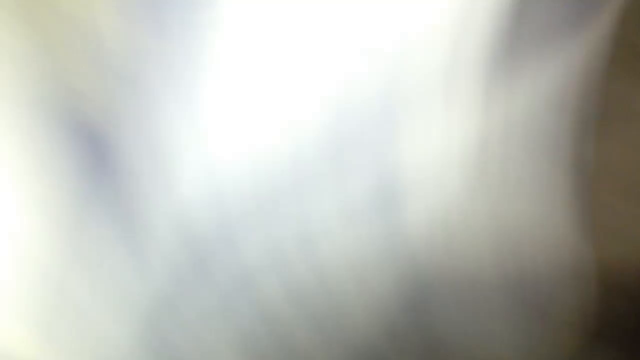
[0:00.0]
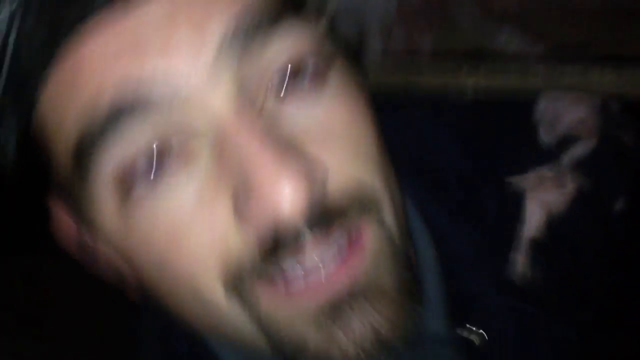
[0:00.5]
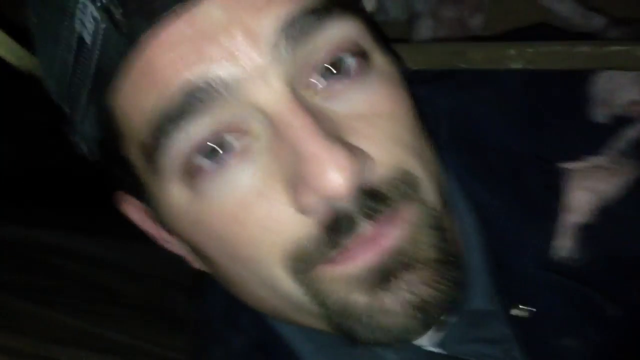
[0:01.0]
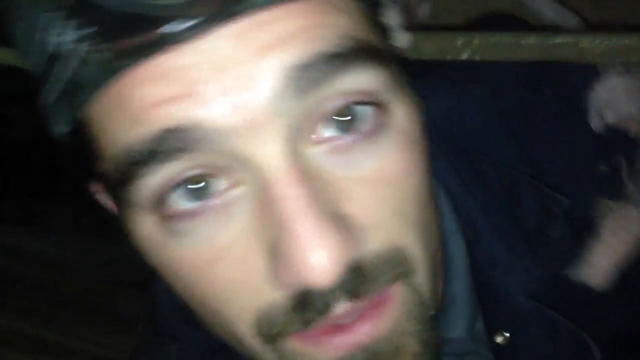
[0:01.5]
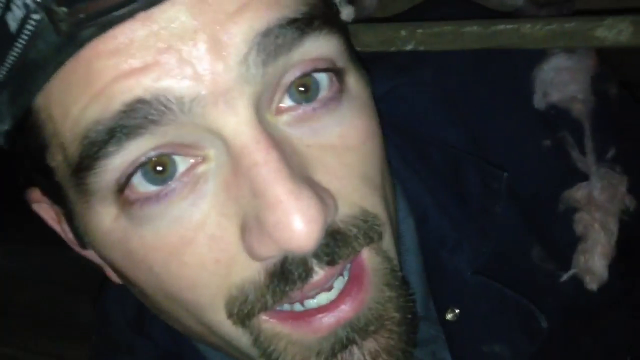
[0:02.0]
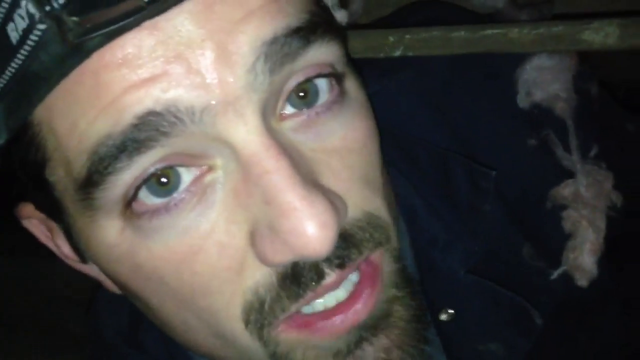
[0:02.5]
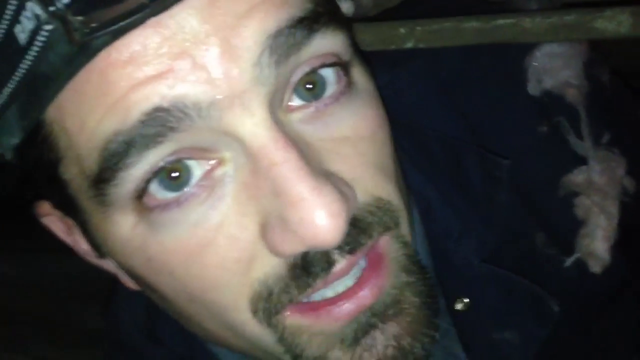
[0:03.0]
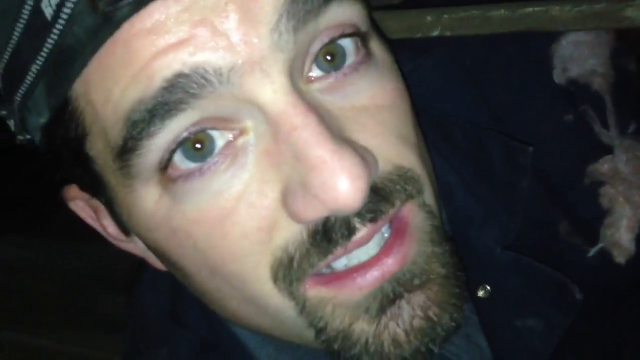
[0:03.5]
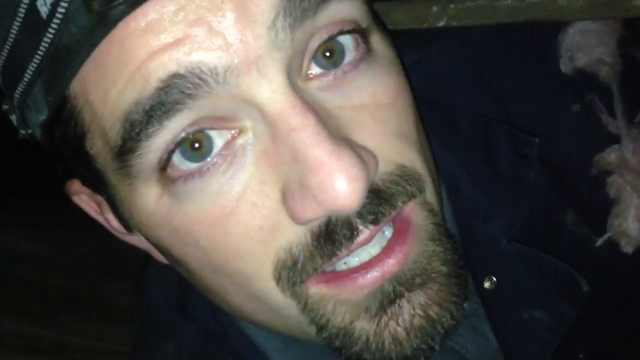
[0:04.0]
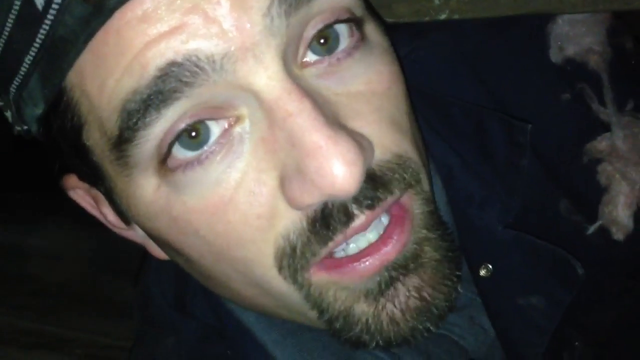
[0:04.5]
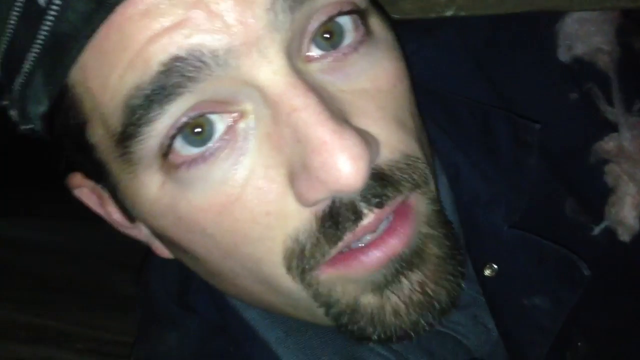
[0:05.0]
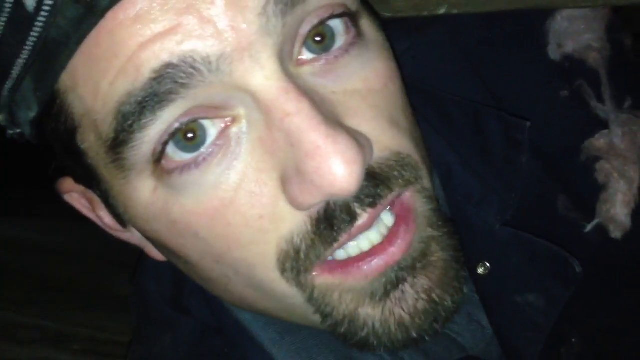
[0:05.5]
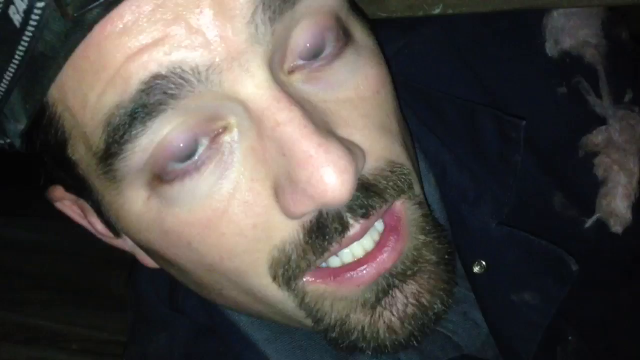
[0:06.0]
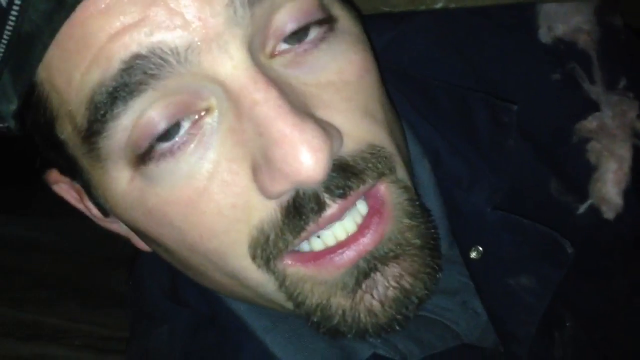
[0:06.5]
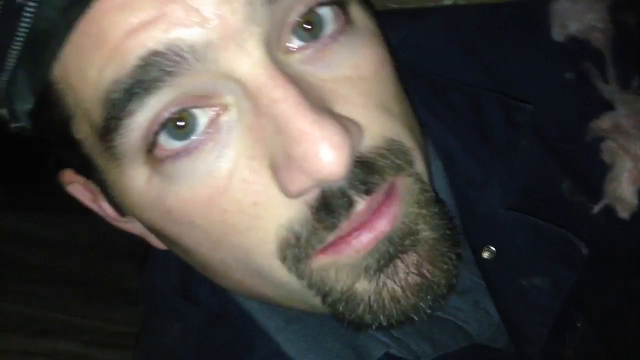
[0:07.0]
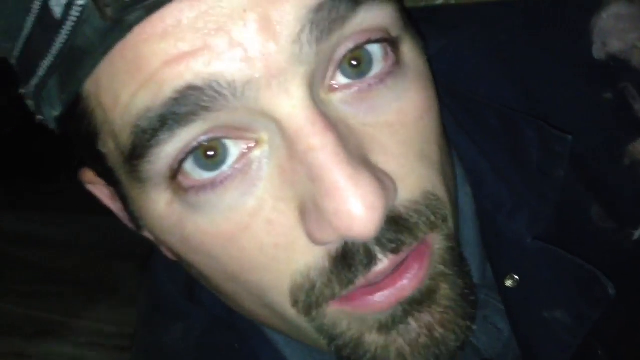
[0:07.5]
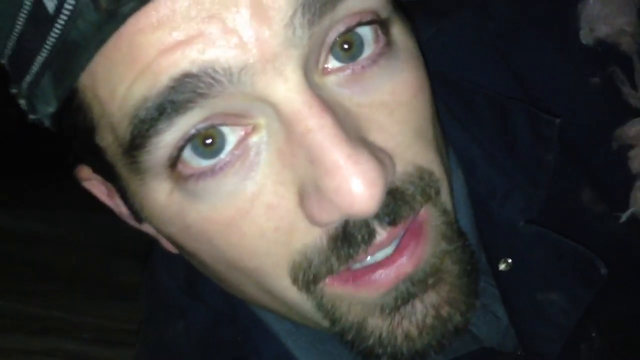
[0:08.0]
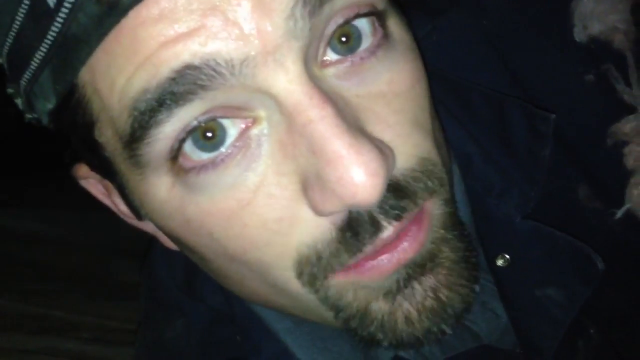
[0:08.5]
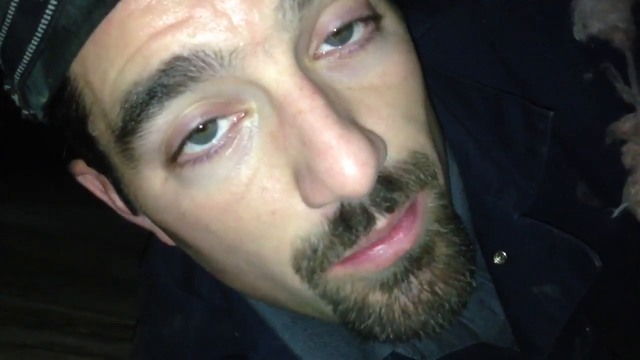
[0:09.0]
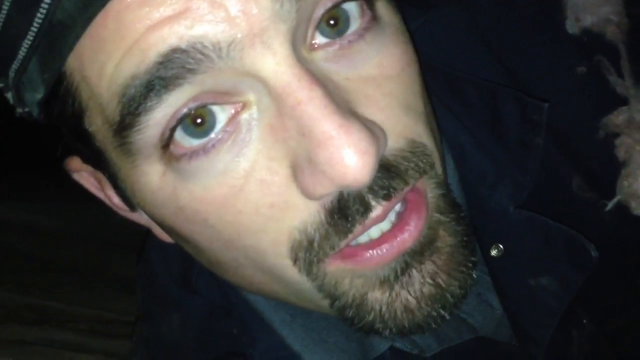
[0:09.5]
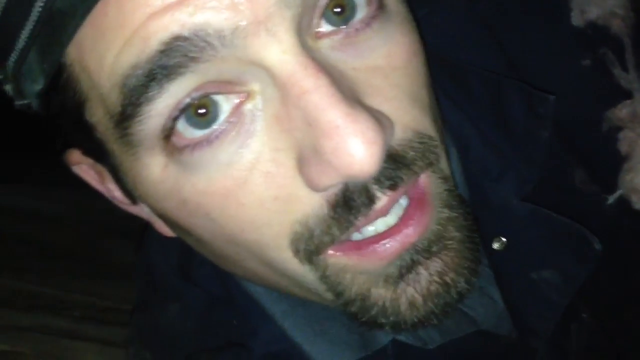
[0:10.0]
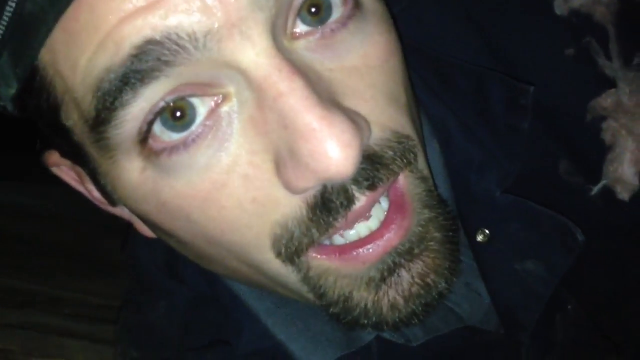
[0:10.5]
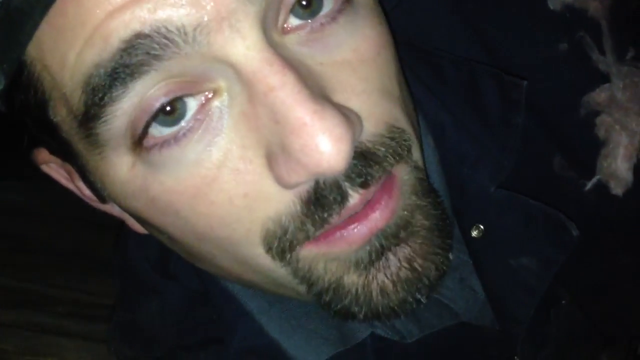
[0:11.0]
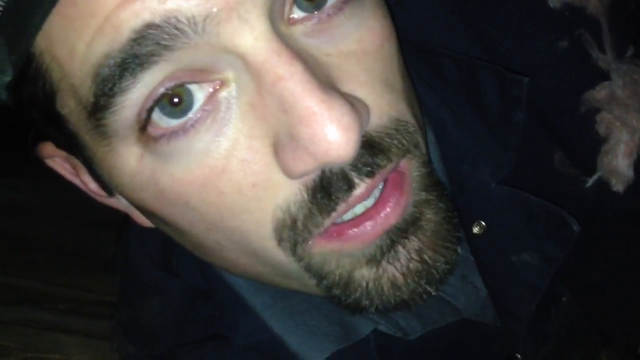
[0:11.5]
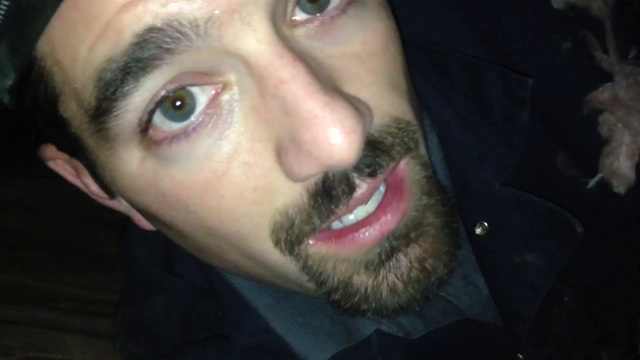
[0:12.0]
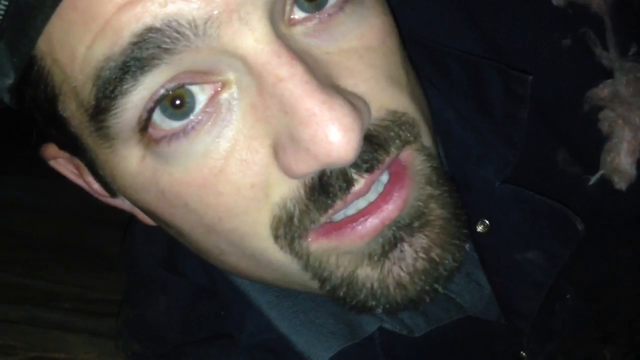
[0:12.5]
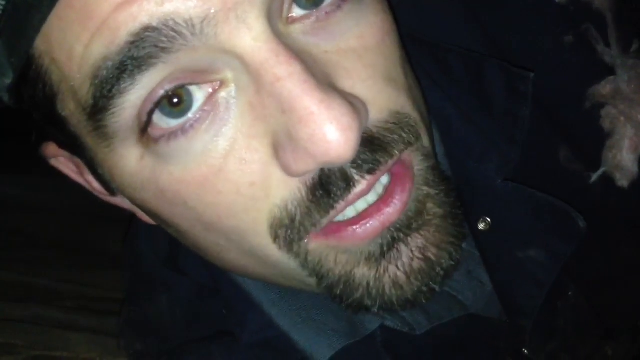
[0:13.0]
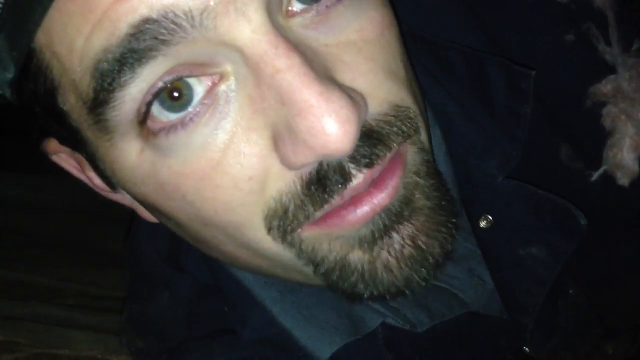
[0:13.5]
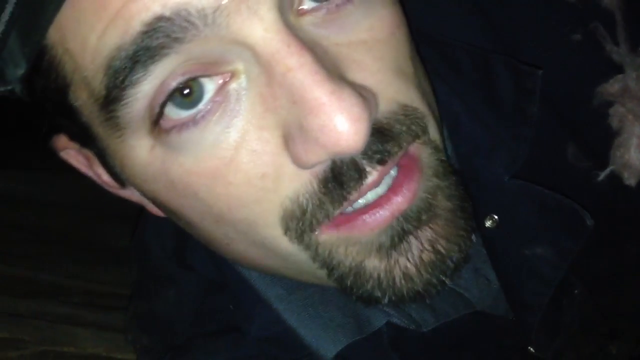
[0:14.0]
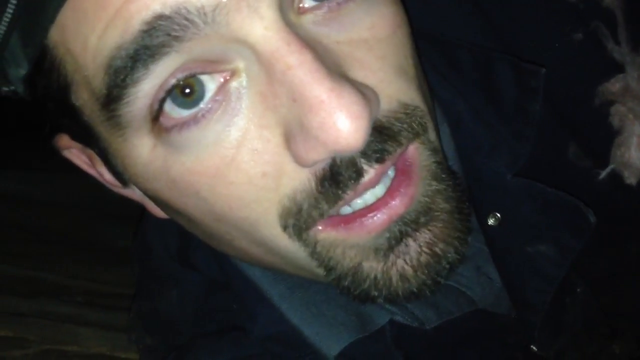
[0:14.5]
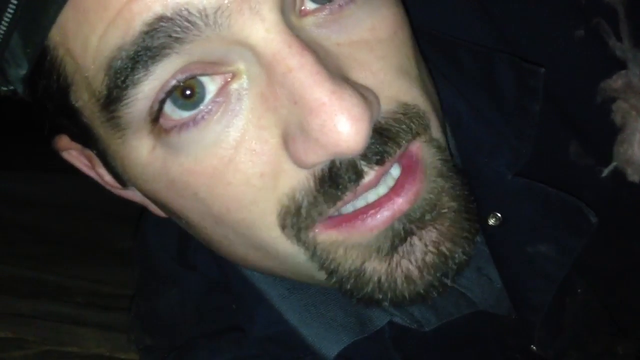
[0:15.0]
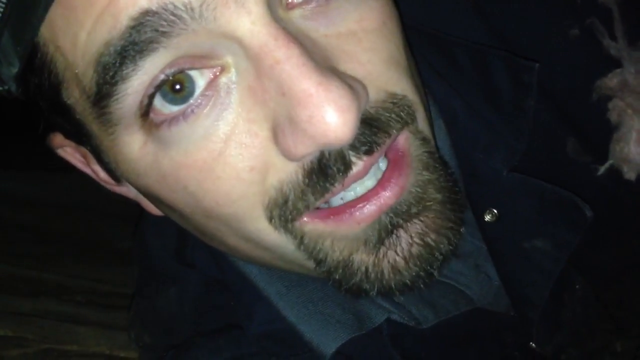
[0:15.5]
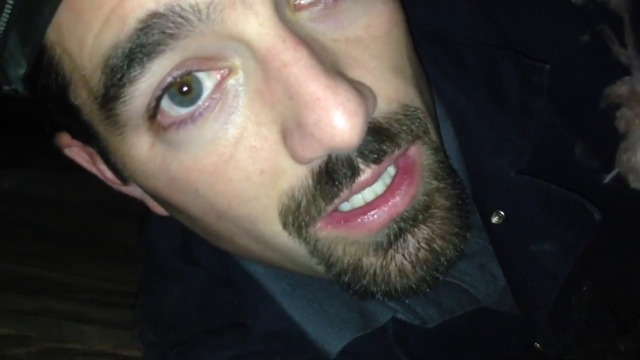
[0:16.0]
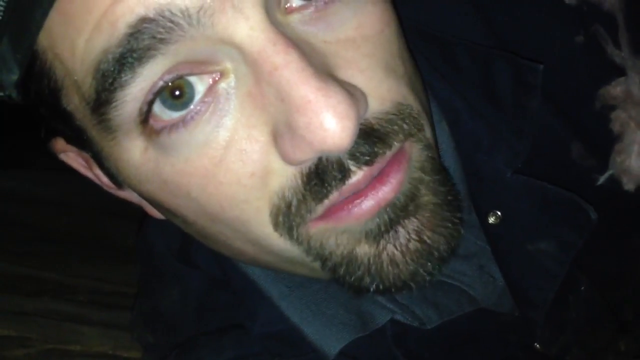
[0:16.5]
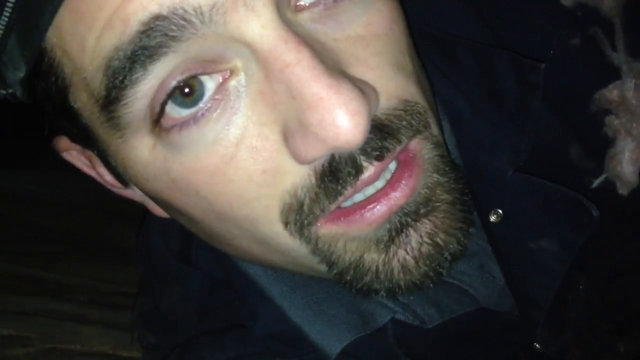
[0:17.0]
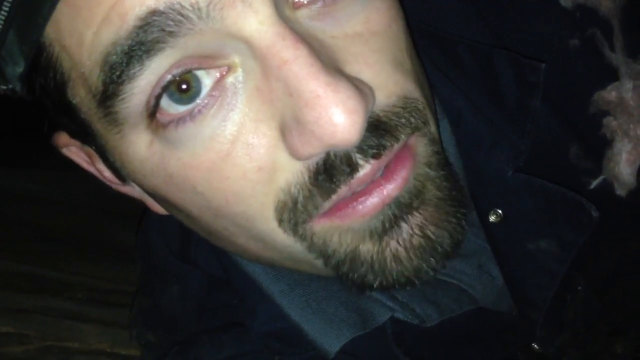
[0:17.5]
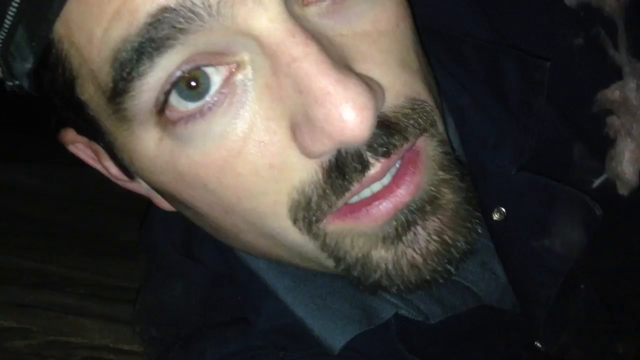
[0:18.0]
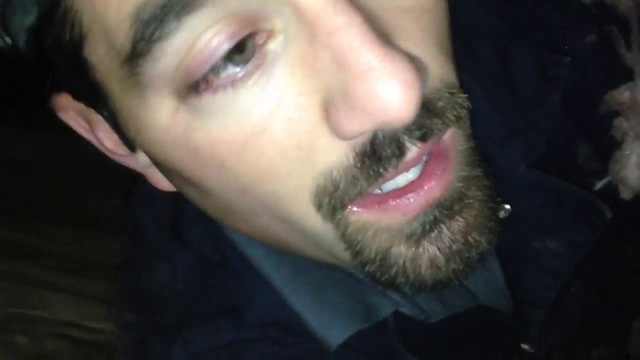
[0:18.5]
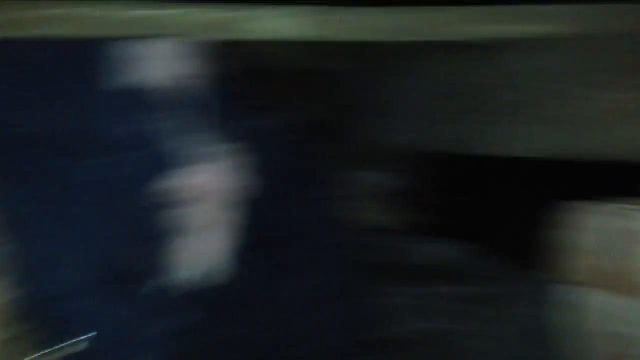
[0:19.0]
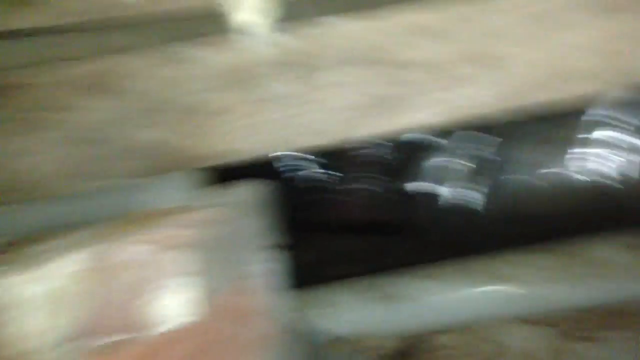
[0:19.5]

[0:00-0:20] The shot opens with a rustling camera that moves from the right, where there is a kind of yellowish fabric, over to the left onto a man's face. His face is really the only thing in the frame, with some background to the left, below him and up to the right. His face is angled, the top of it pointing up to the left. He has dark hair, a goatee and a little bit of a beard trim around the sides. A dark blue sleeve is visible, and his ear is on the left side. He looks into the camera with brown eyes and leans his forehead ahead a little. Looking intently, he has a light or a camera wrapped around the top of his head. His mouth barely moves; he looks like he is probably whispering into the camera, and at one point he closes his eyes slowly. On the right side a leaf hangs down, touching his shoulder, and when he moves the leaf moves a little too. Sweat pours down his face, and wrinkles cross the top of his forehead as he talks. He blinks a little faster, his mouth barely moving as he talks. He looks over to the right and pans the camera to the right, where there is wood with little slits to see out of, but it is dark outside, like at night.